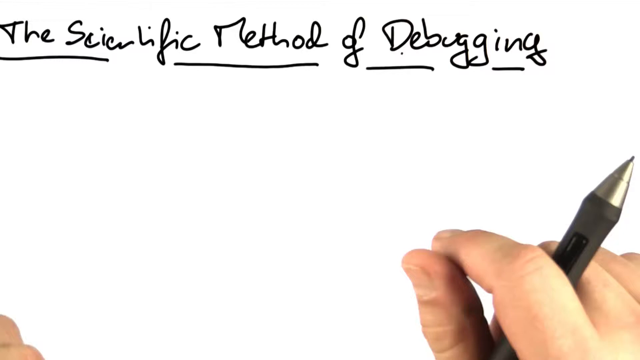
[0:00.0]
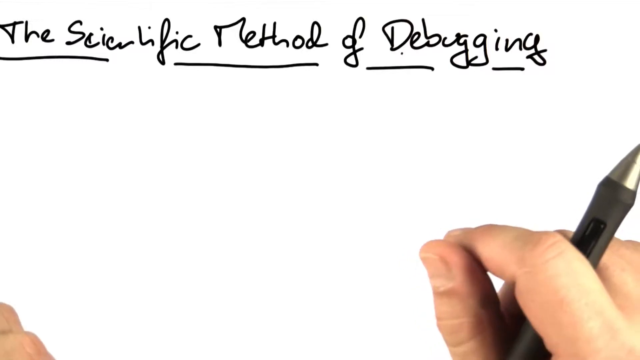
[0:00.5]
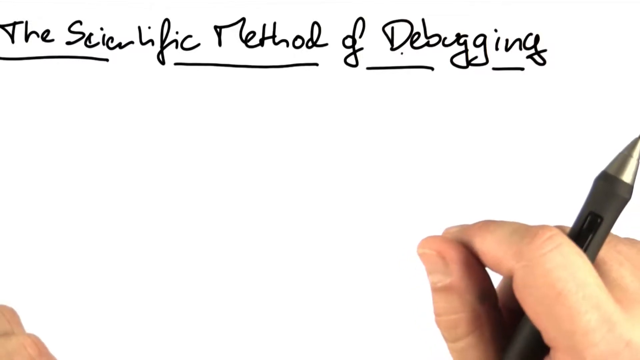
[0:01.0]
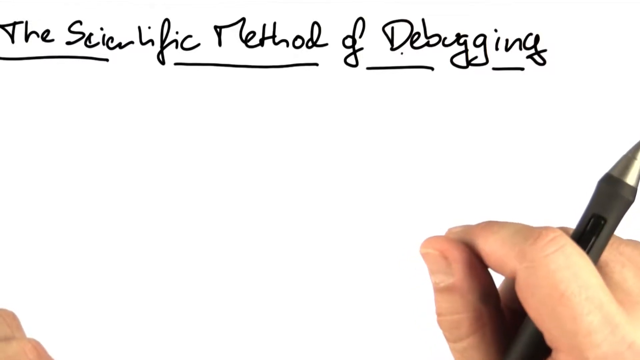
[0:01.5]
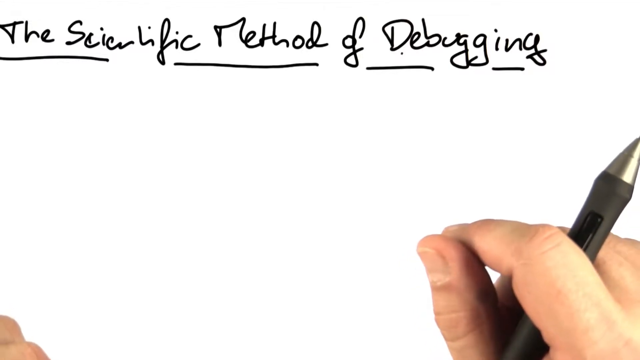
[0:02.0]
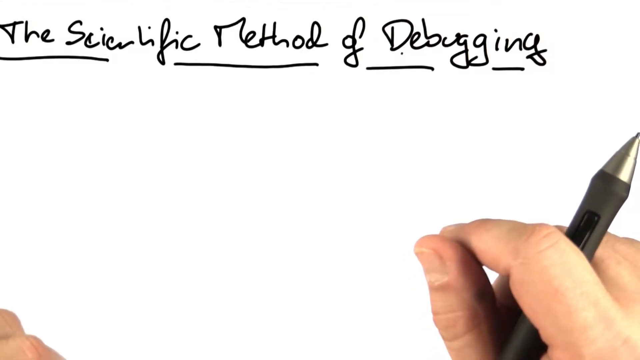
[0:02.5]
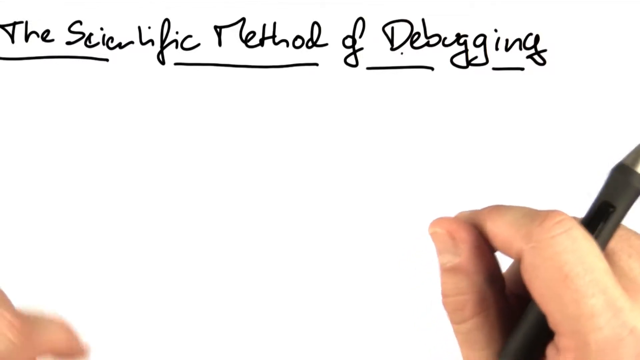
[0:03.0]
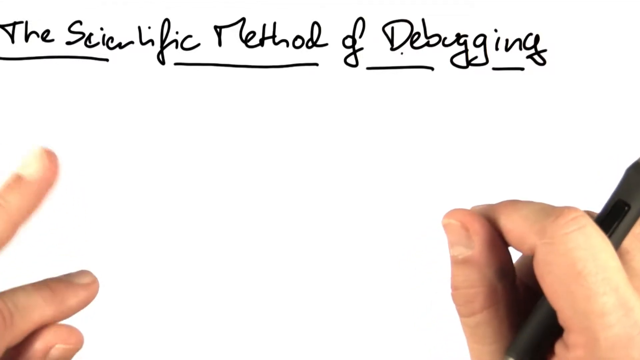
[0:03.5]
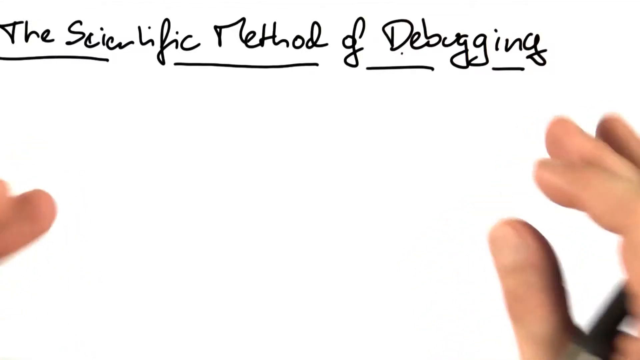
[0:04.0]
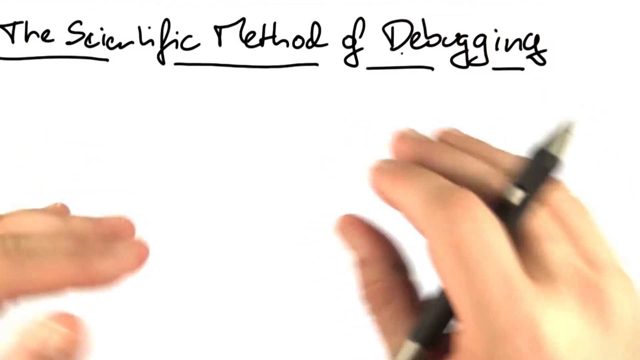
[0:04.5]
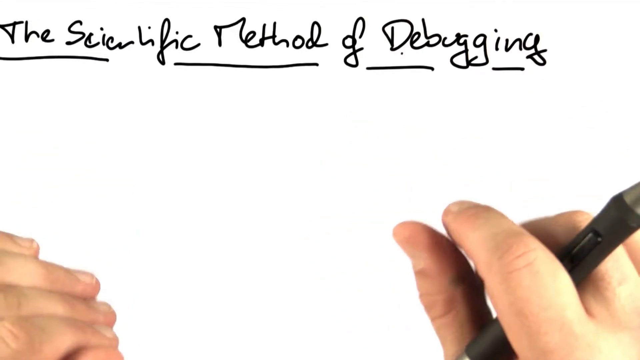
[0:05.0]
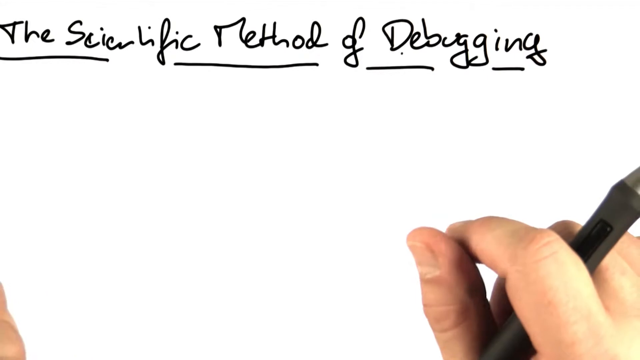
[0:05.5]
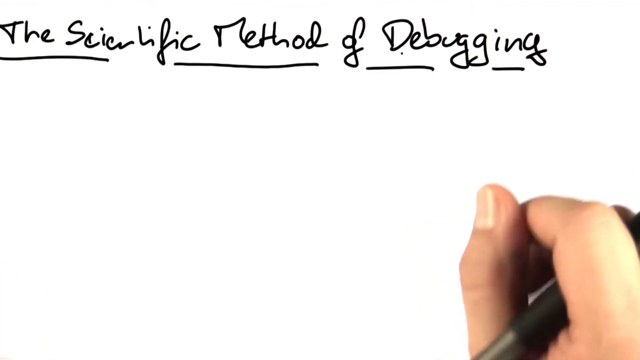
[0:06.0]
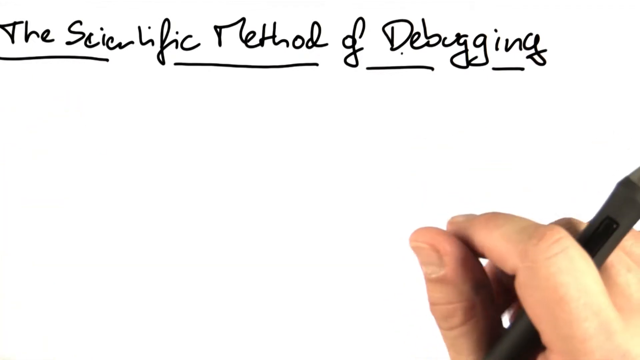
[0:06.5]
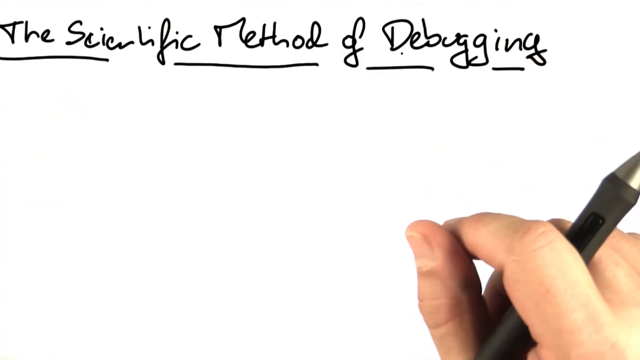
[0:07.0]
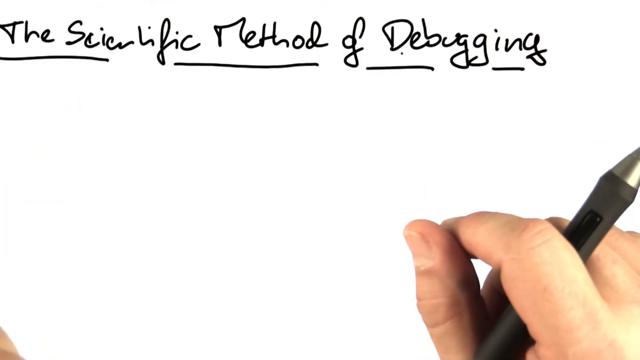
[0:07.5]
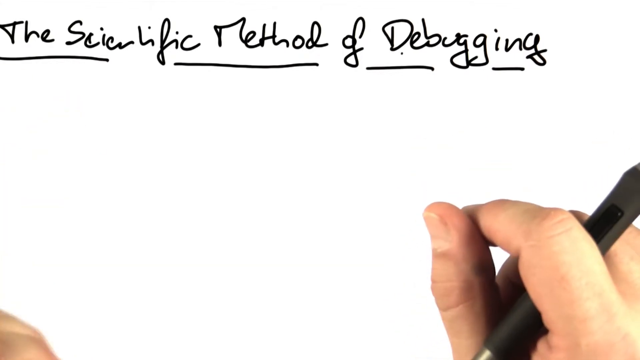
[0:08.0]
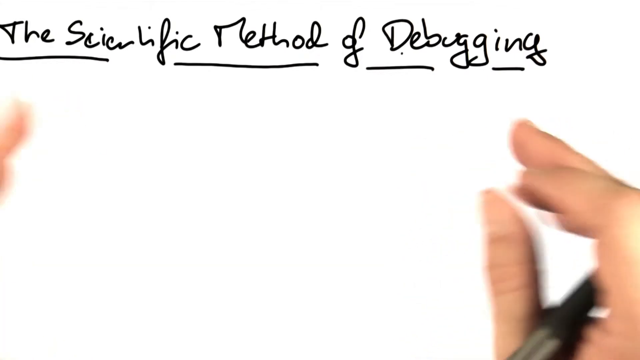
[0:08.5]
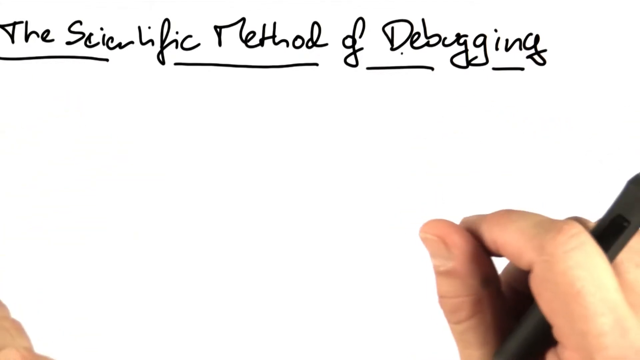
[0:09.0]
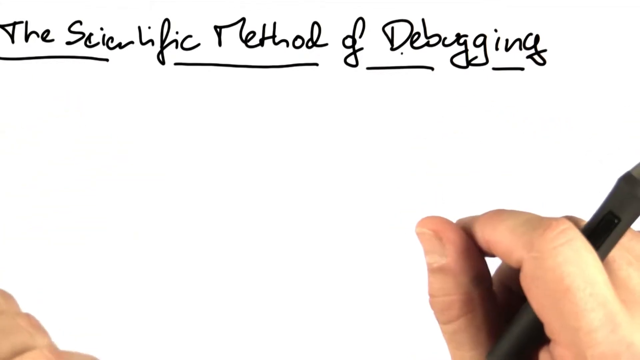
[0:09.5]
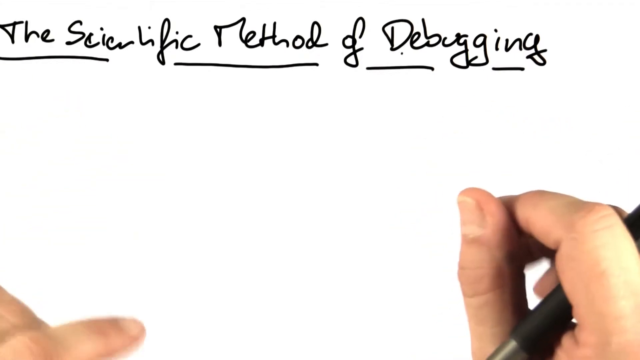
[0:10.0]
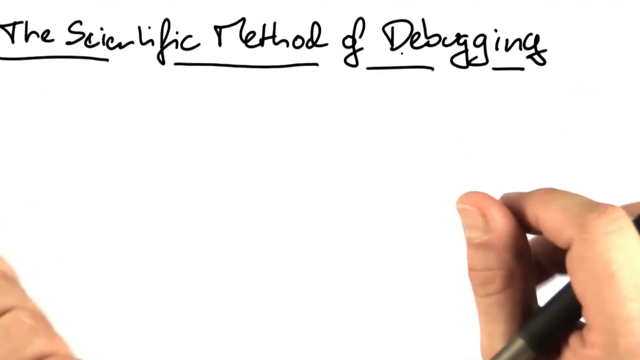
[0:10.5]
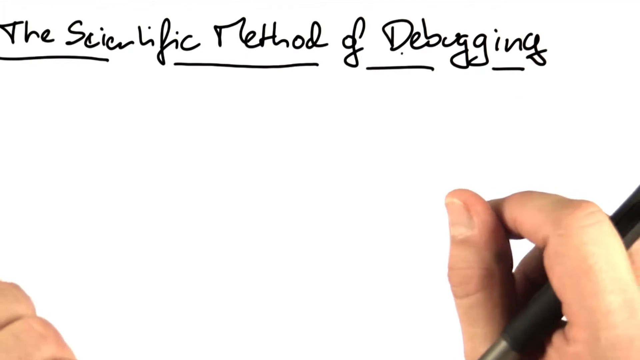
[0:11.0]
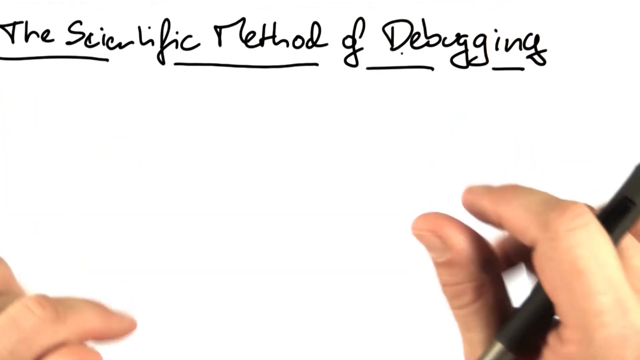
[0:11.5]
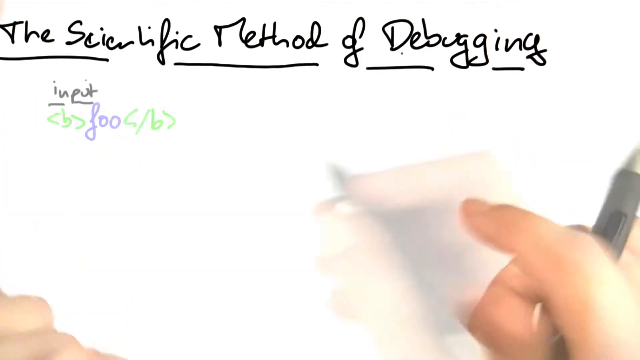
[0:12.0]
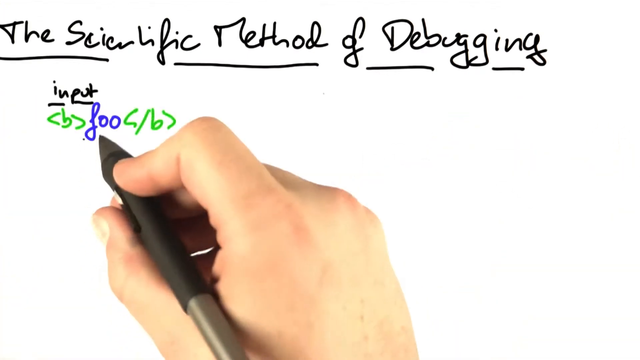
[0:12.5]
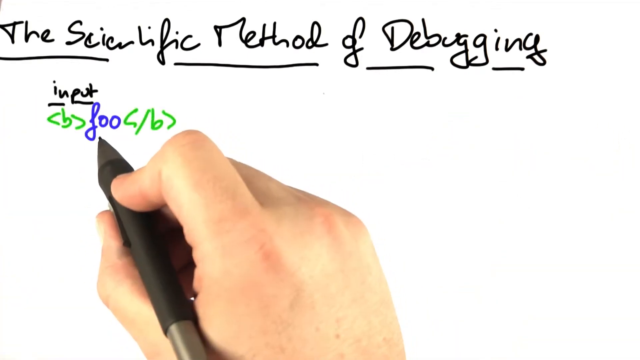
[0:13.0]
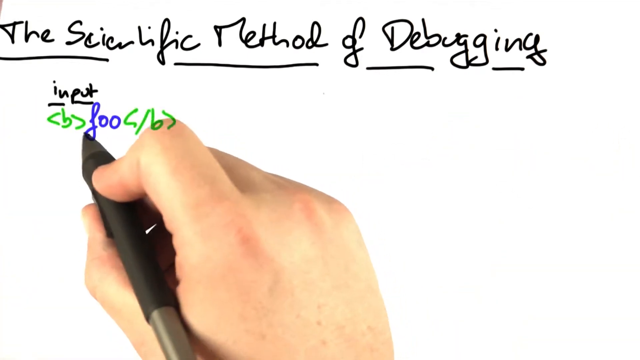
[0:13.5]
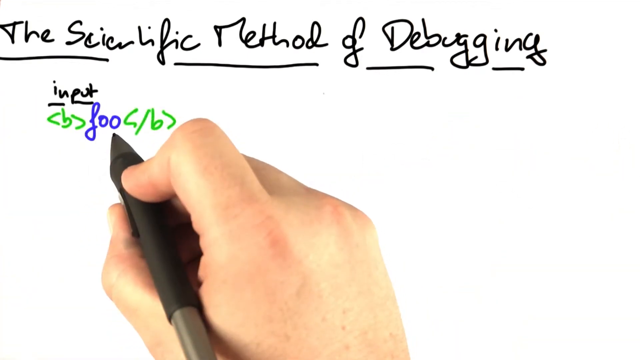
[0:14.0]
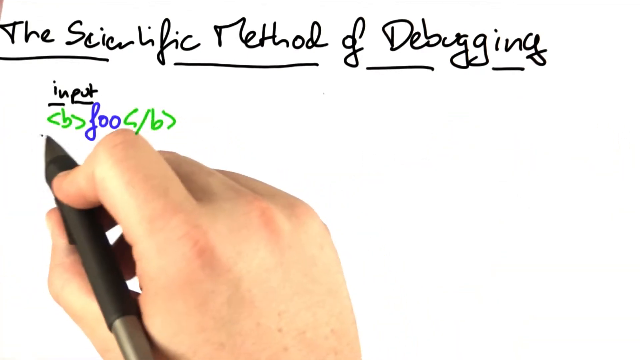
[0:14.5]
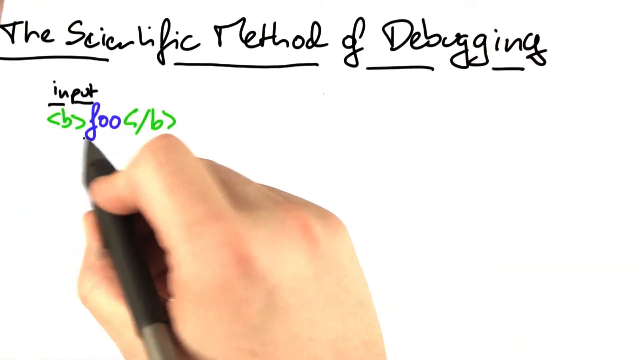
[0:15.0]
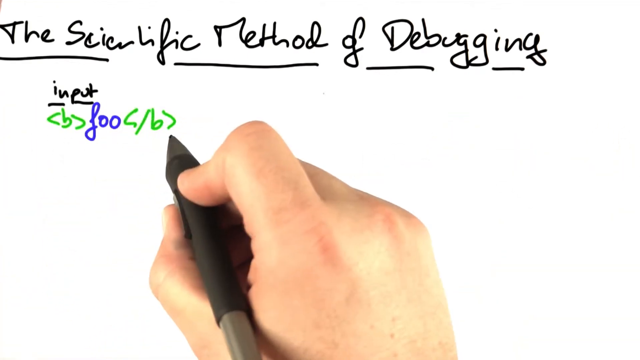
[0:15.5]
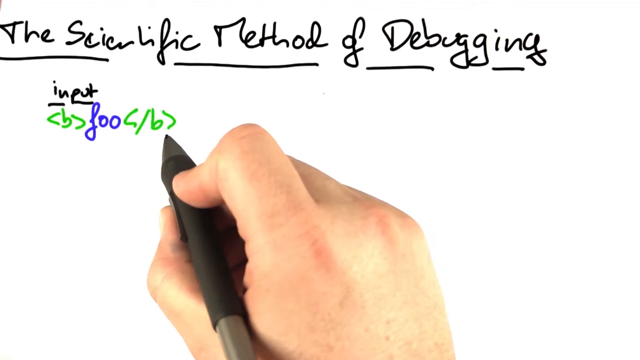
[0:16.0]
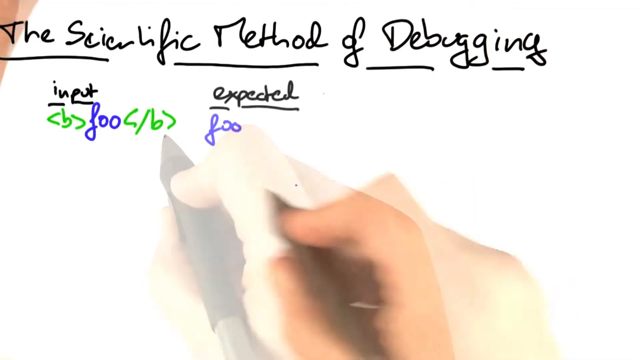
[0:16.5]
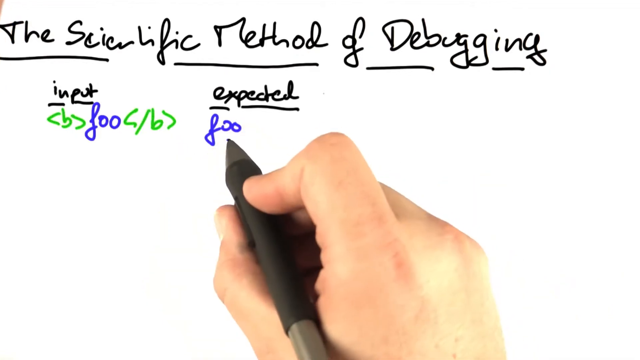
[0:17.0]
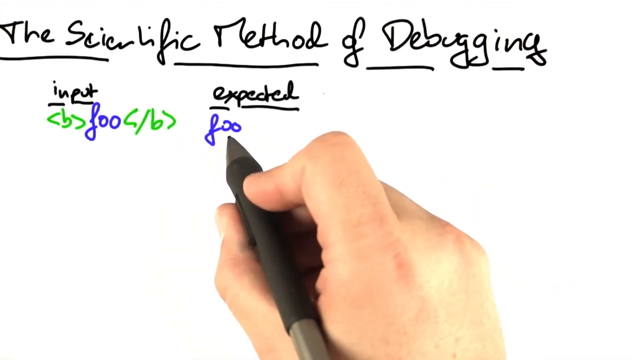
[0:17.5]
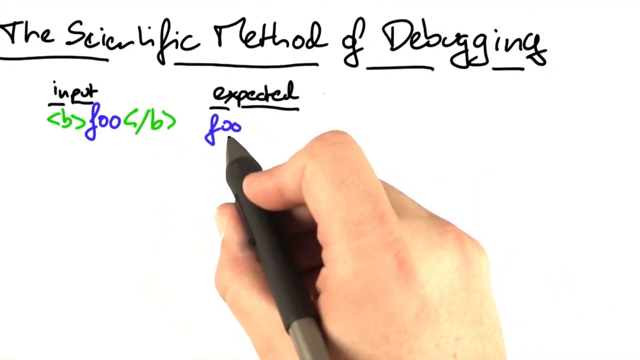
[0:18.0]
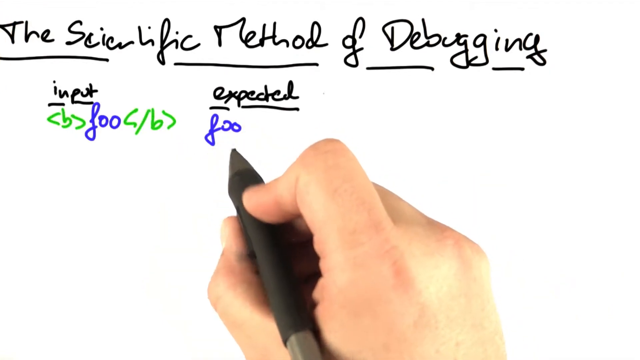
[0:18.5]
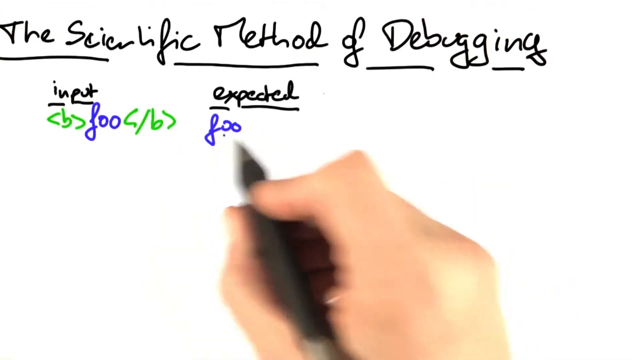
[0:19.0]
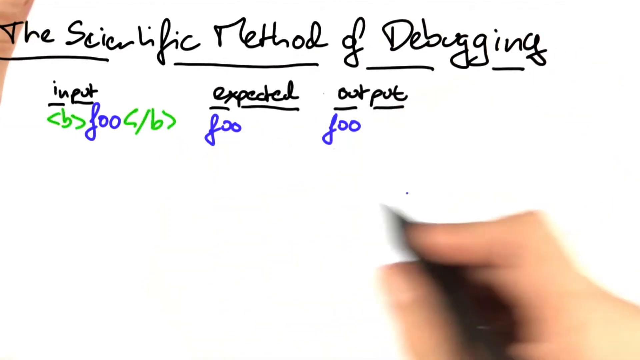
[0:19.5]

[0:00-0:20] Text at the top of the screen reads "the scientific method of debugging," and in the top right corner a person's hand holds a pen between two fingers. The person seems to be describing something while gesturing with both hands. The text "input" appears, and below it is b in brackets, then foo, then slash b in brackets. The person highlights the foo, then the first bracket, then the second, closing bracket. To the right, "expected" appears underlined, with the text foo below it. The person seems to be explaining something, and further to the right "output" appears, also underlined, with the same text foo below it.